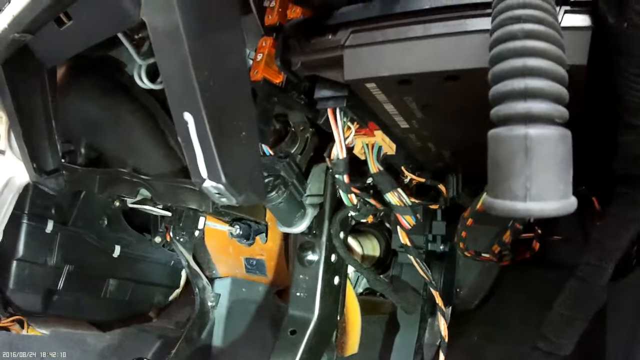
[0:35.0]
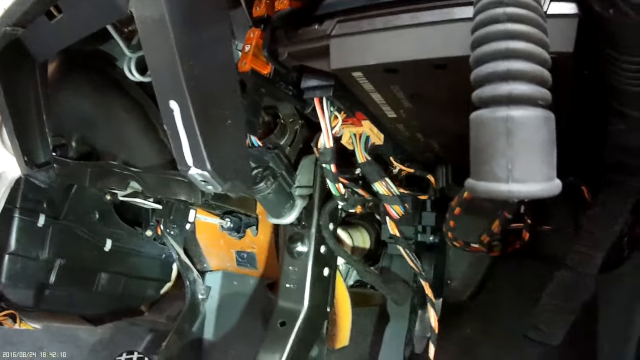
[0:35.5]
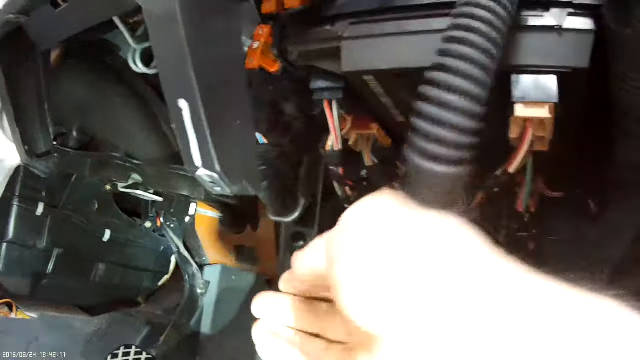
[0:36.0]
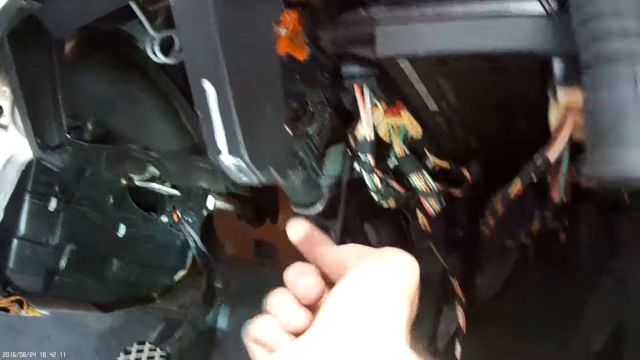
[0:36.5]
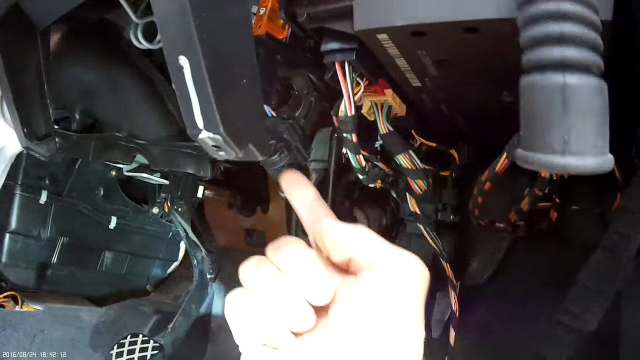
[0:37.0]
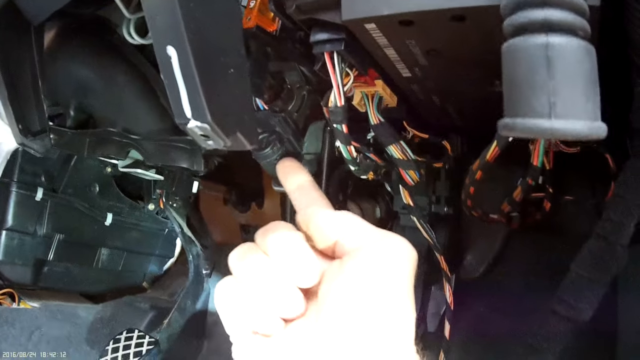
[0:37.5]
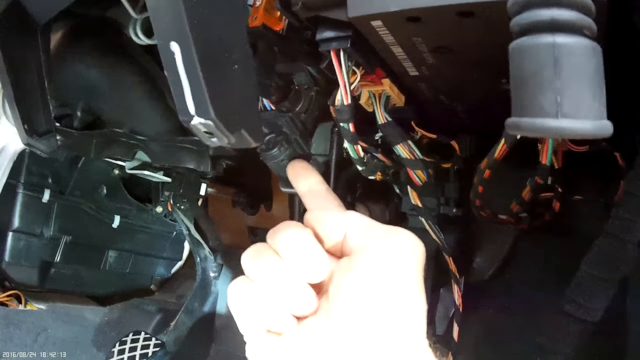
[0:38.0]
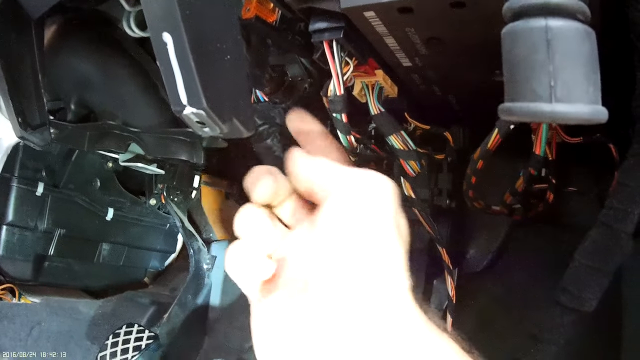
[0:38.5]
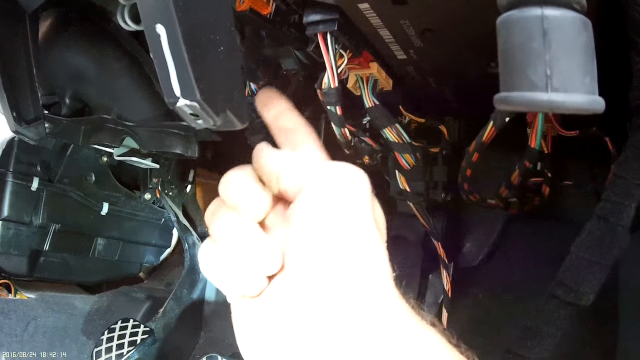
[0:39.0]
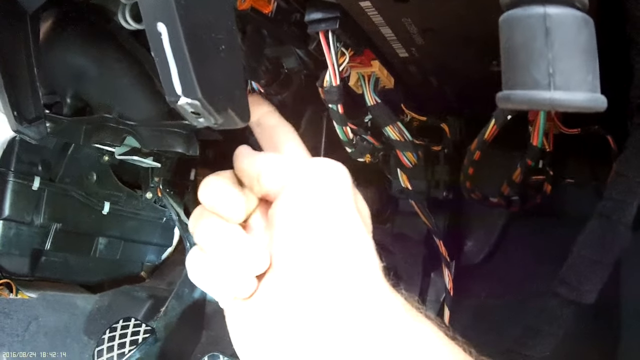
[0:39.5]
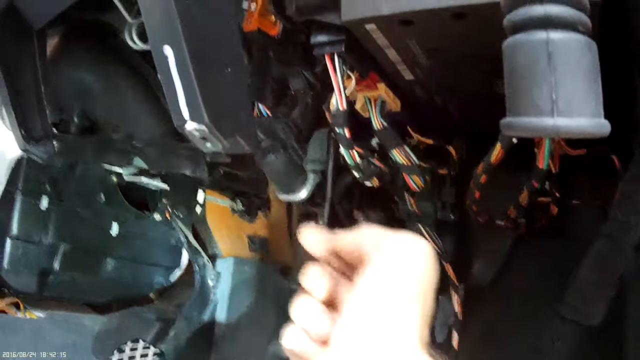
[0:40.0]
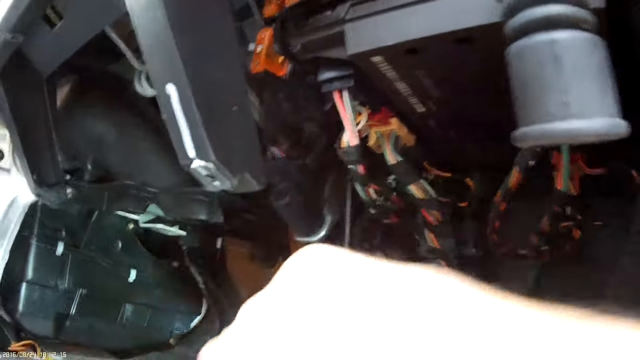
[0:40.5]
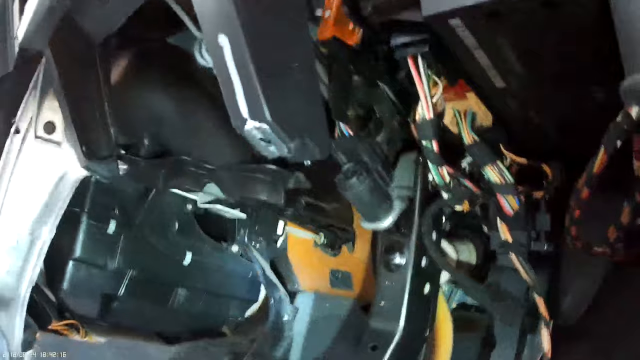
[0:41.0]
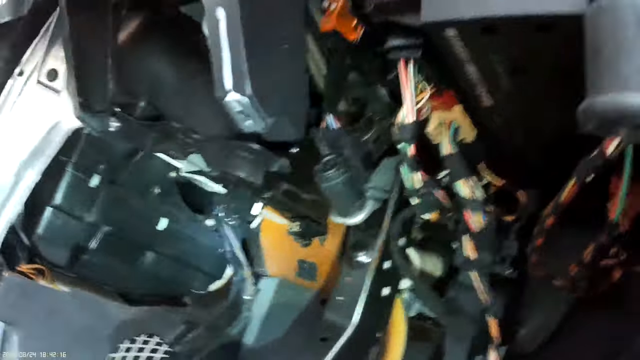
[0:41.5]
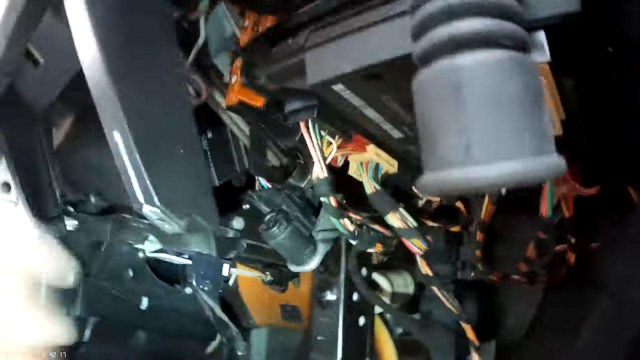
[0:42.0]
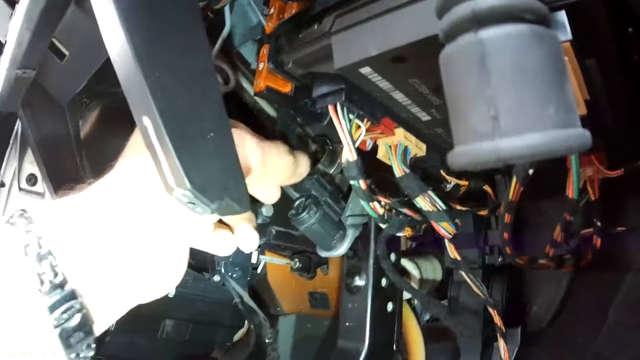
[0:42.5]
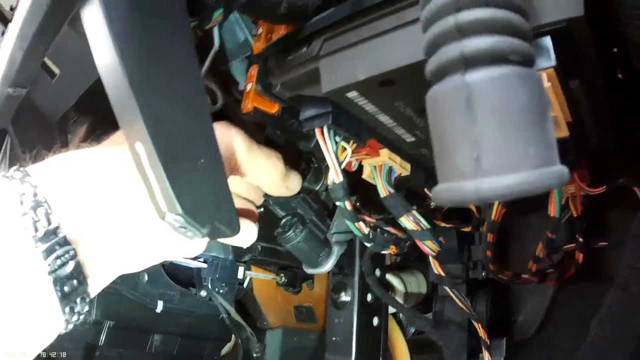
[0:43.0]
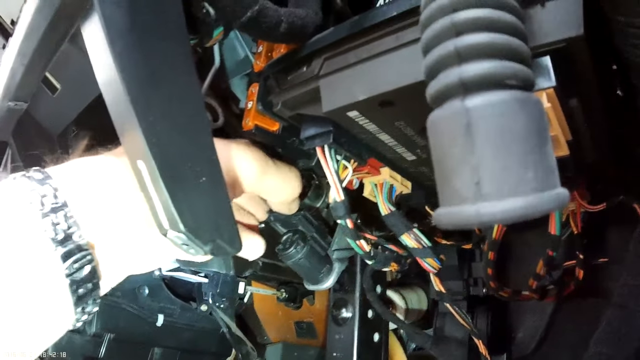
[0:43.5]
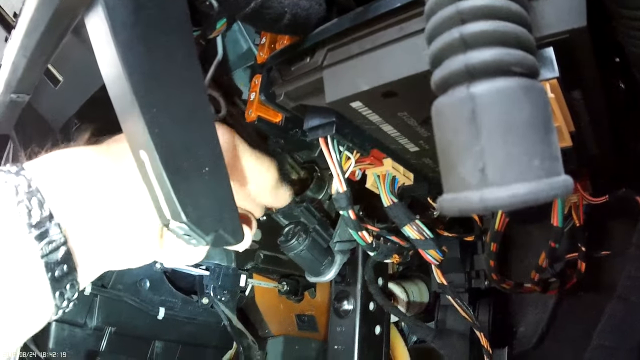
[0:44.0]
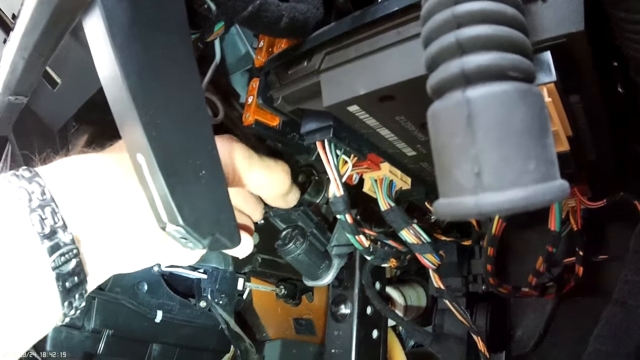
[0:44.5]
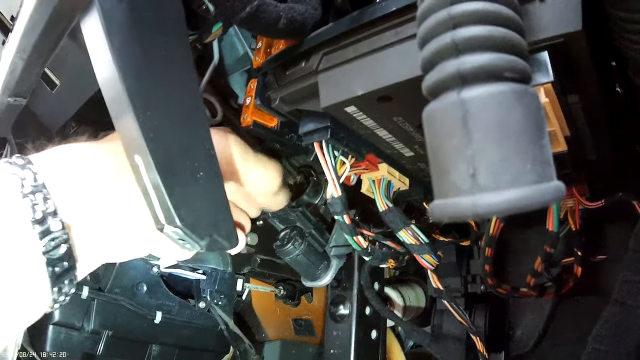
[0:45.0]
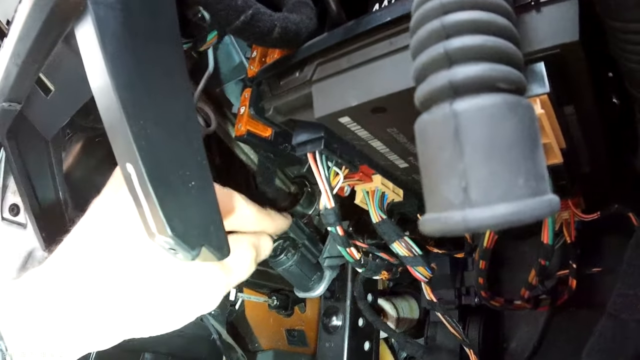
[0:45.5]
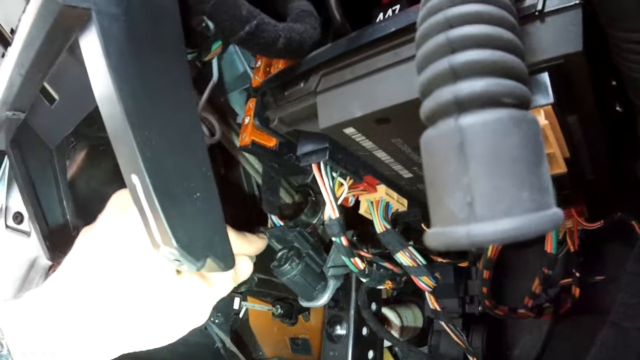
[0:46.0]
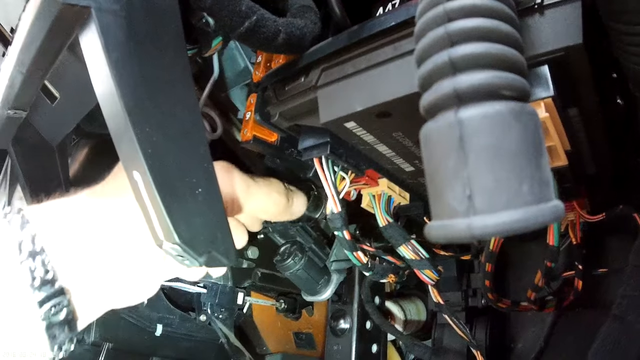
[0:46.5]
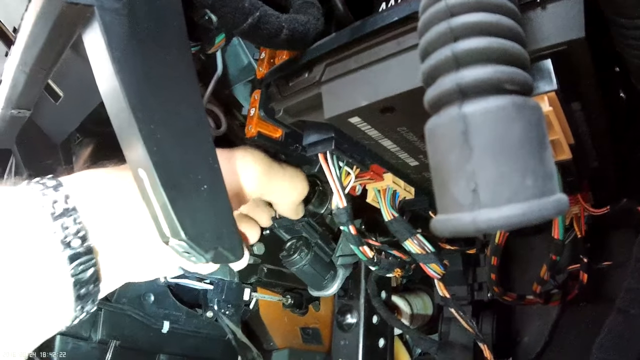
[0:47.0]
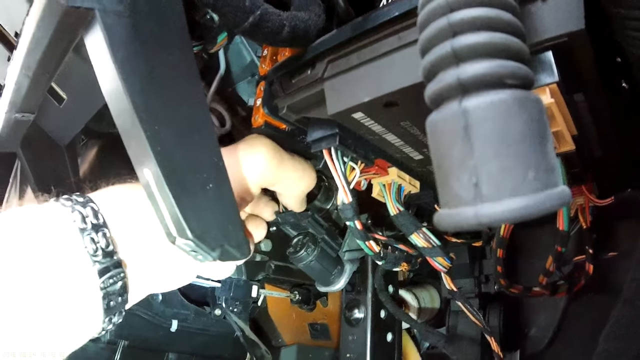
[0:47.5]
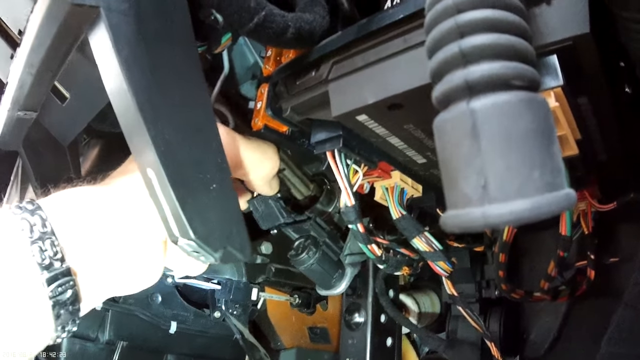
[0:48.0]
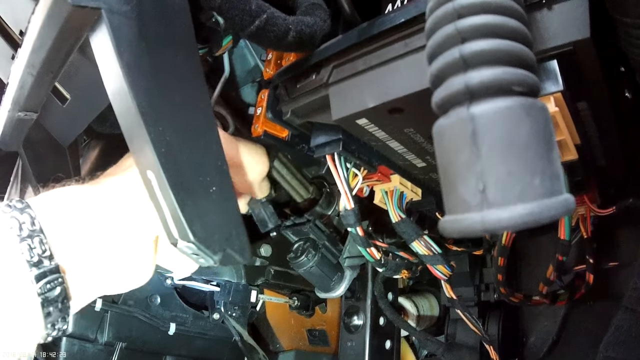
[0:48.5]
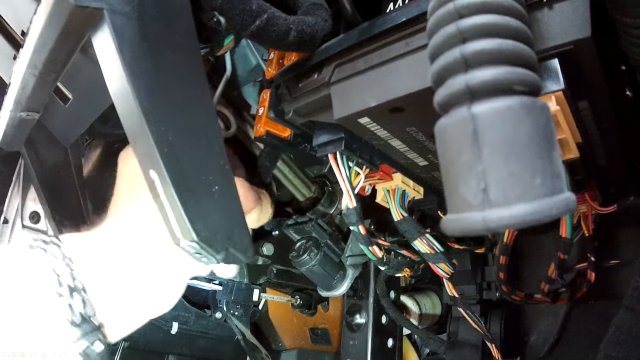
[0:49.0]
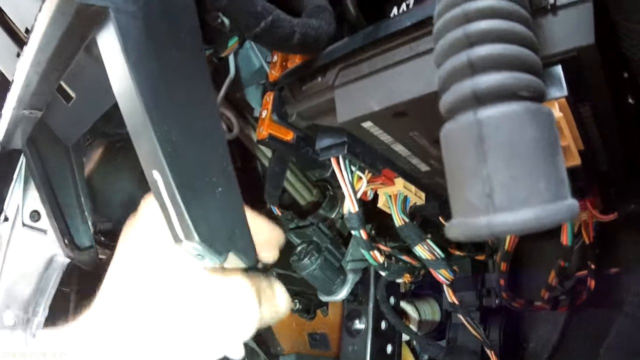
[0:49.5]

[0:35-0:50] The footage continues under the hood of the bike, where the important parts are. A white man wearing a wristwatch points and appears to be pulling out a switch. With his left hand he unclips a piece: a small black rectangular clip that unhooks when its sides are pinched. This appears to be where the brake switch seen earlier will be attached, and he appears to be showing exactly which piece to unplug.